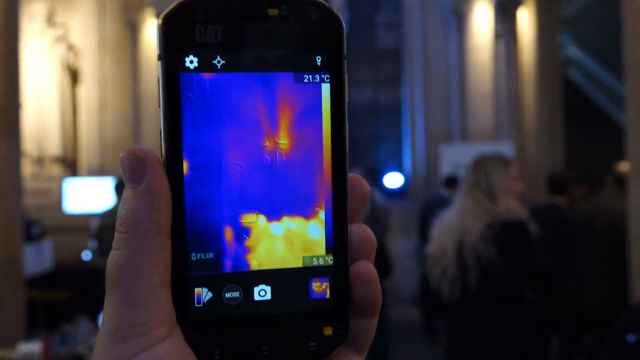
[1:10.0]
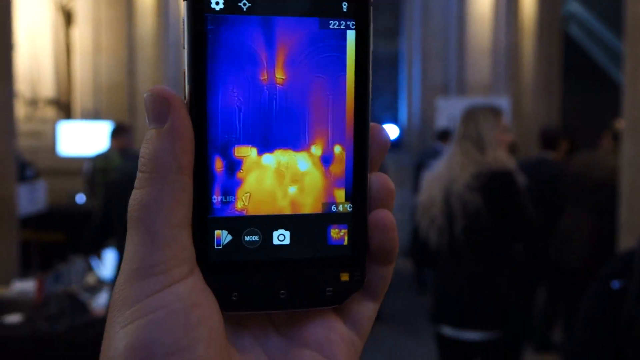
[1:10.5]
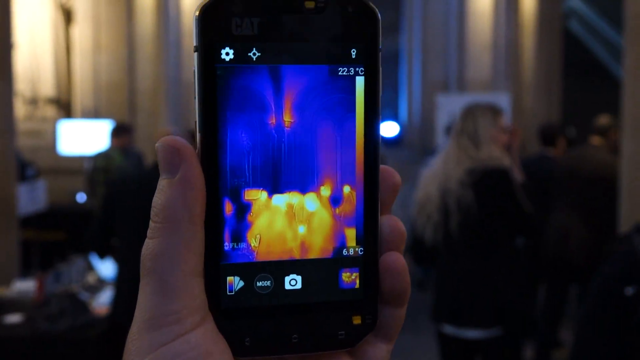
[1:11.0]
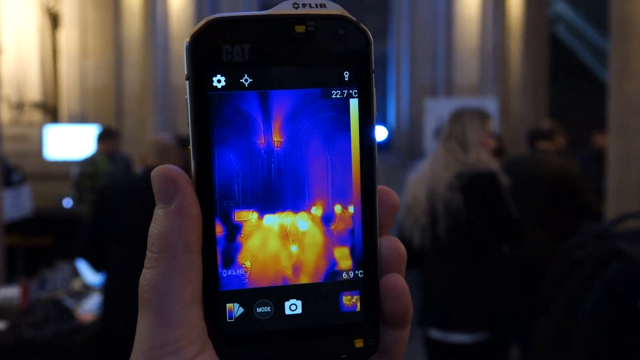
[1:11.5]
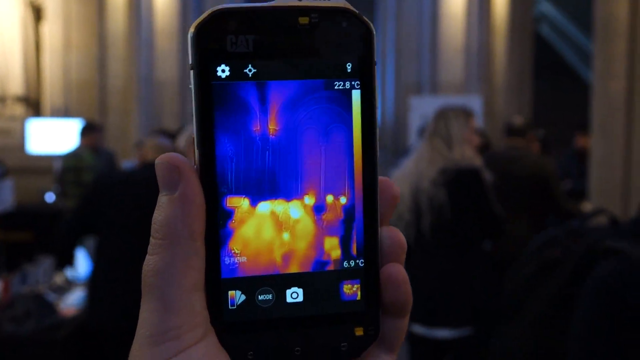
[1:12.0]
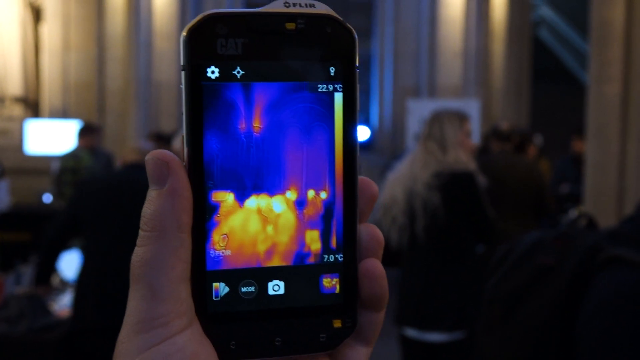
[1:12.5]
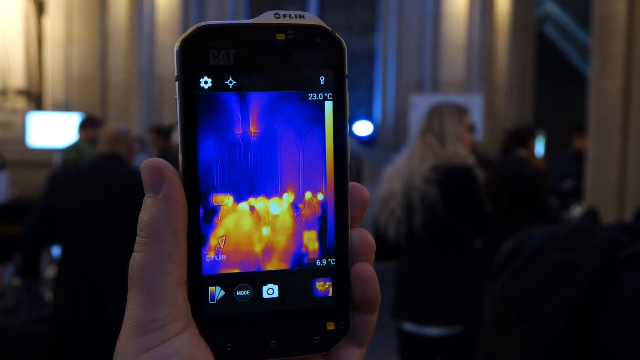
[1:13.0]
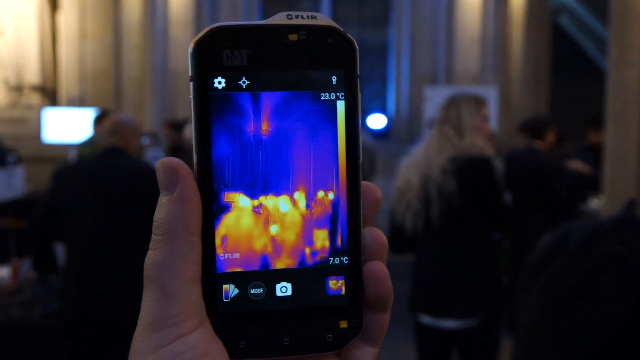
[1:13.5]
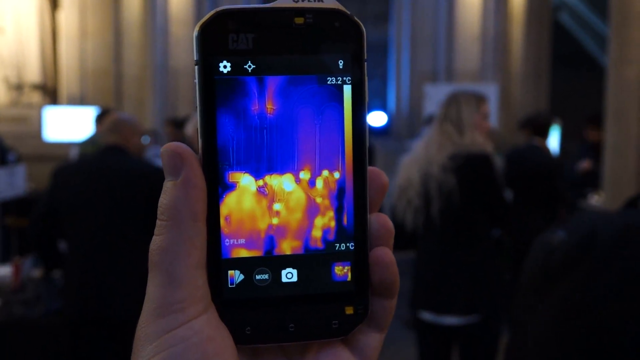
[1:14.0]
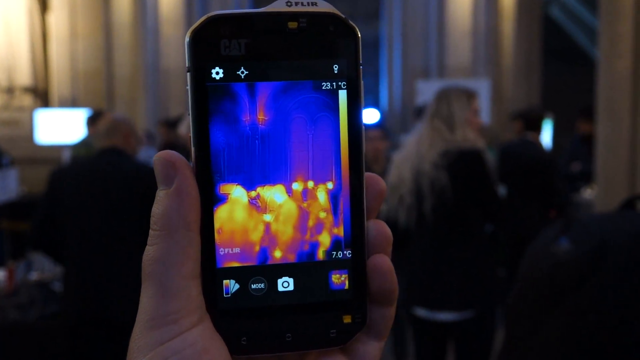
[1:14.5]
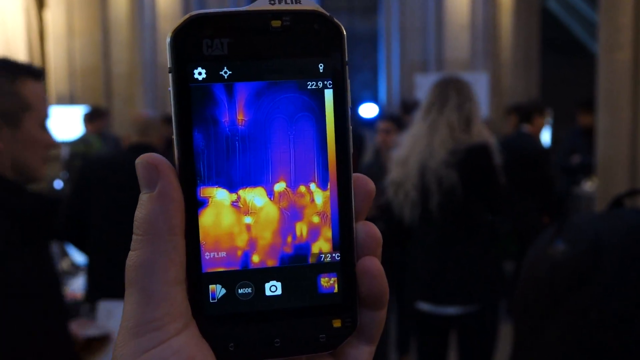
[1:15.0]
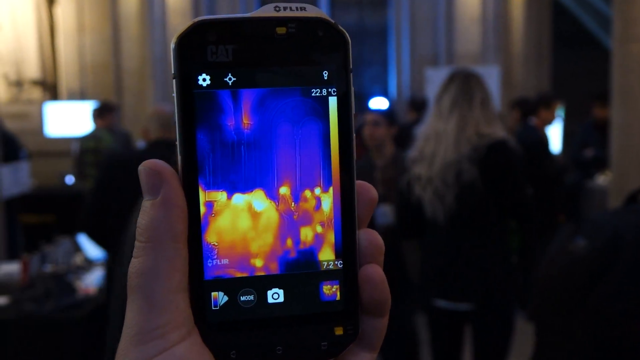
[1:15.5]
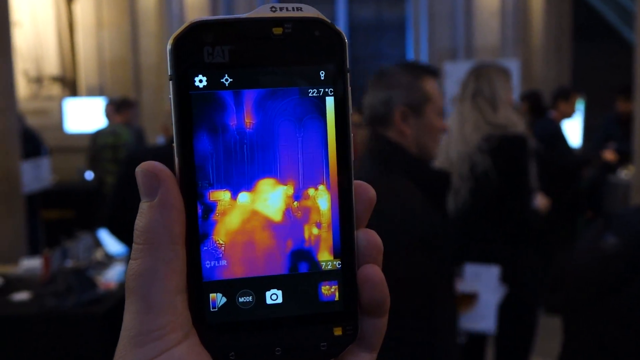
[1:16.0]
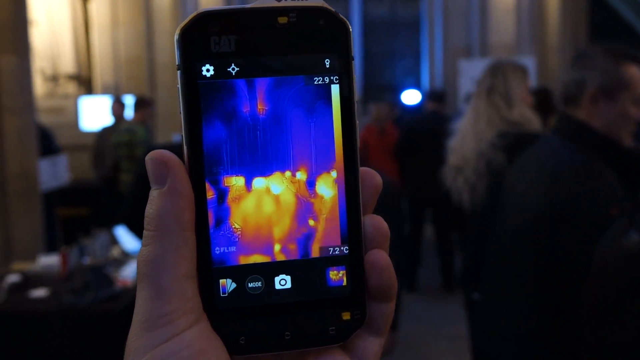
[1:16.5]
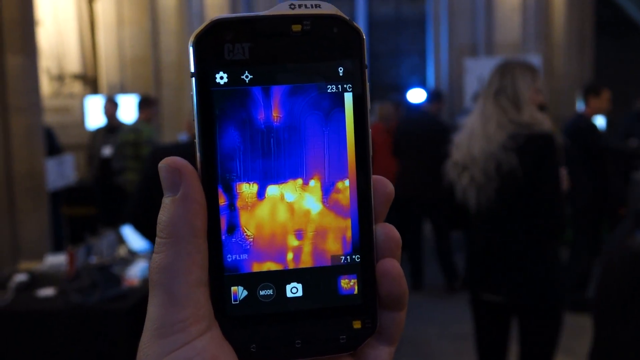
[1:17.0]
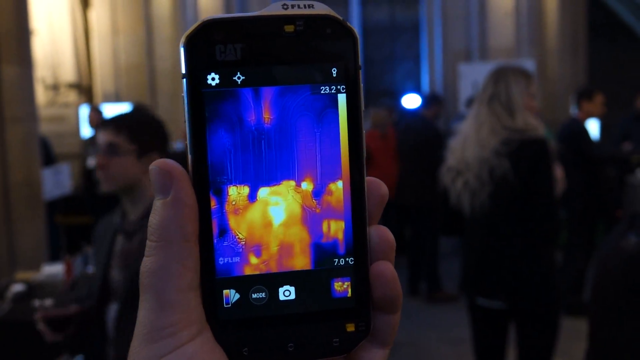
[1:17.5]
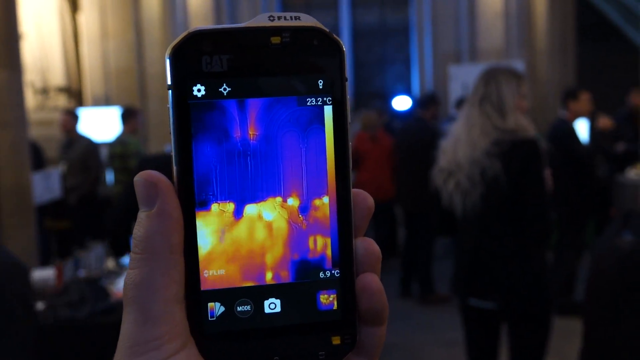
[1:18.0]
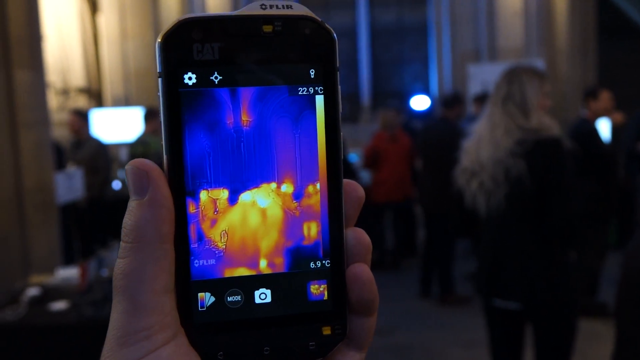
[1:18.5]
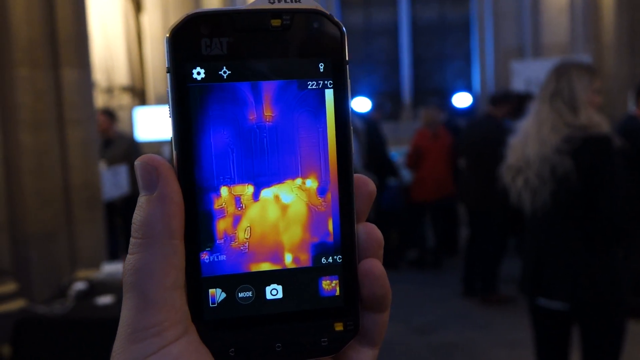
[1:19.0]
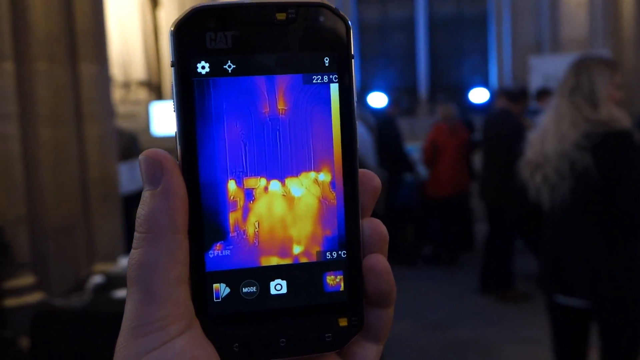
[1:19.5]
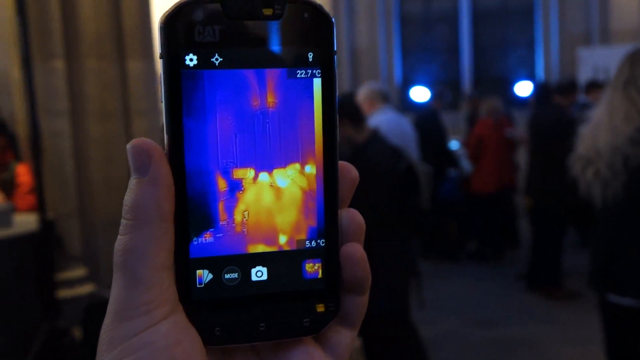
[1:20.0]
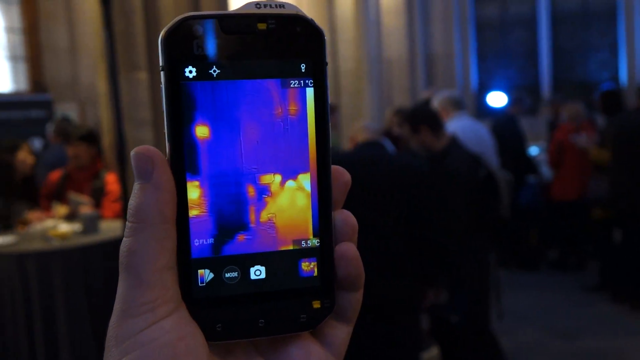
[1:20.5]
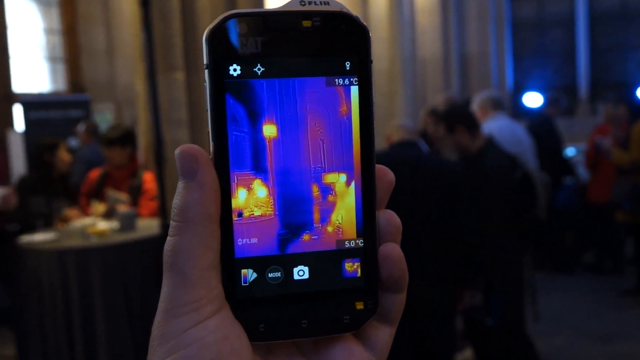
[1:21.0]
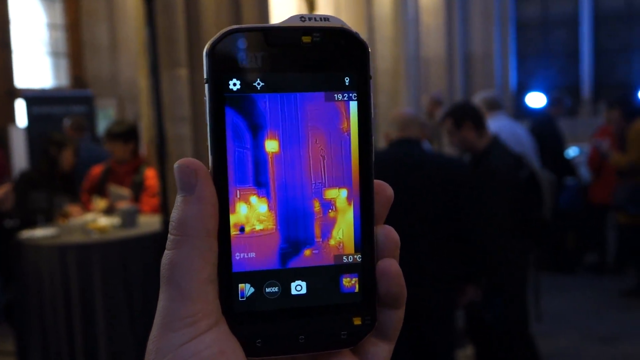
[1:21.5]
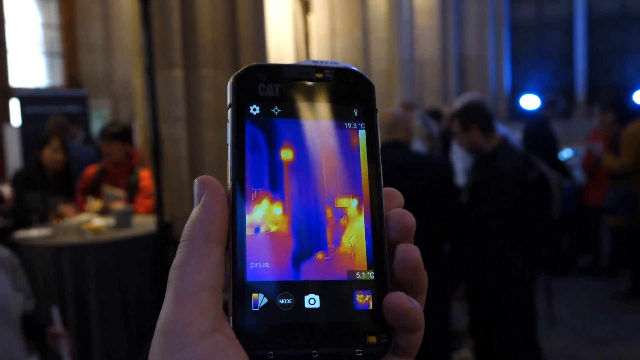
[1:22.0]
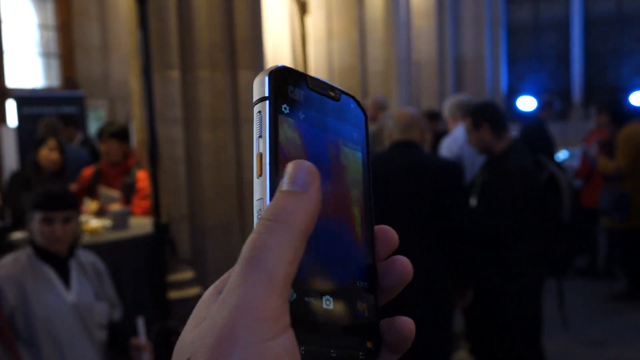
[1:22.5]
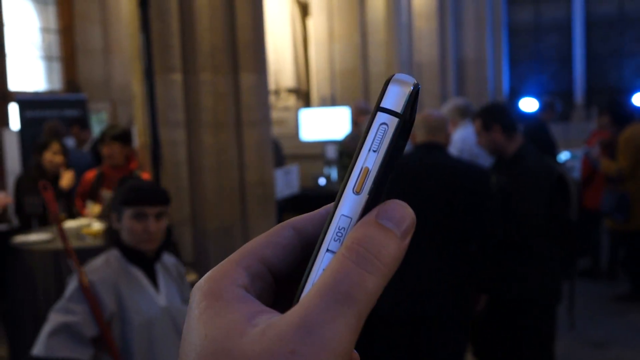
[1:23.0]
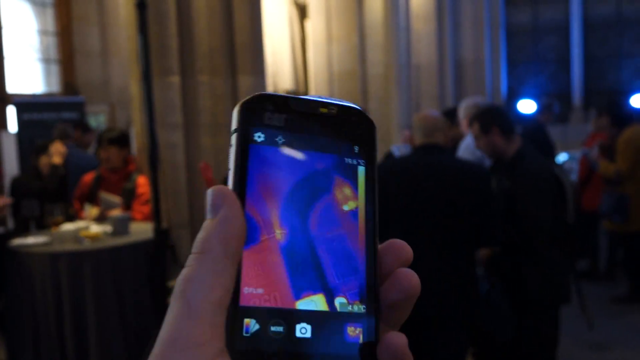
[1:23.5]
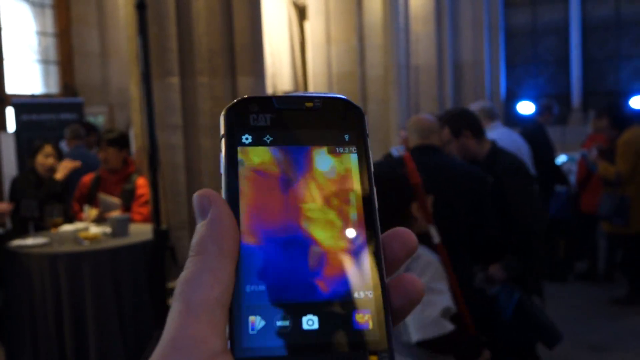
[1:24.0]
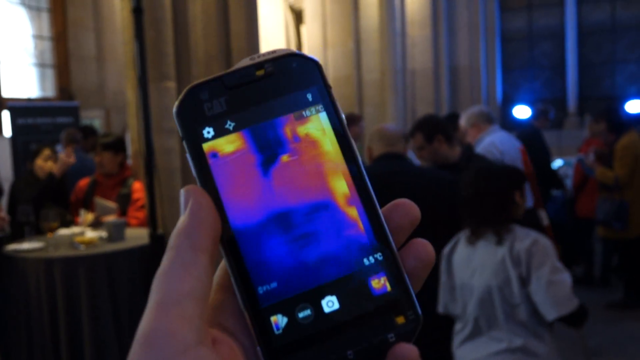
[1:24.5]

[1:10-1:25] The man holds the FLIR thermal imaging device in his hand, pointing it at a crowd of people inside an older-style building. He suddenly flips the device to the right, showing its thin side, then goes back to pointing it at the crowd, whose bodies show in yellowish, reddish hues where they emit heat. The Celsius temperature readings go up and down as he points it at the people. He quickly flips it to the side again, showing the silver side of the phone while the screen is black; it seems a little thicker than a typical smartphone. He keeps pointing the device at different people and objects in the room, showing how they appear on it.